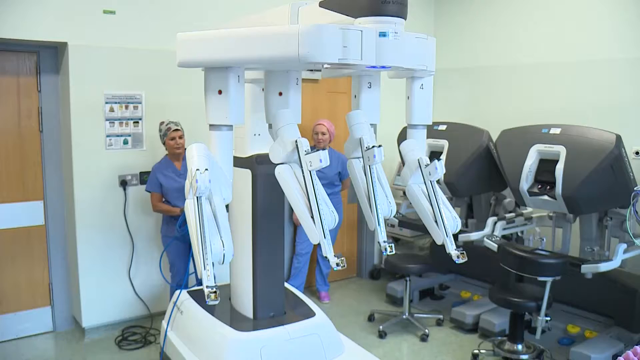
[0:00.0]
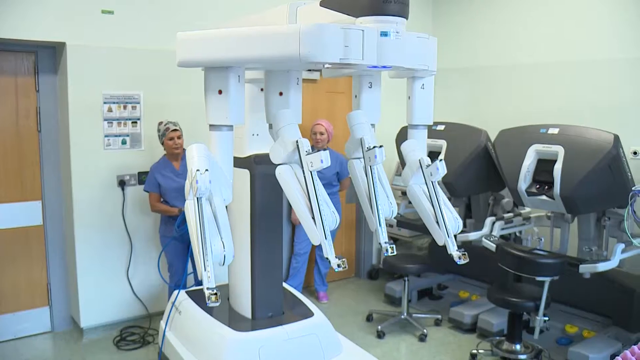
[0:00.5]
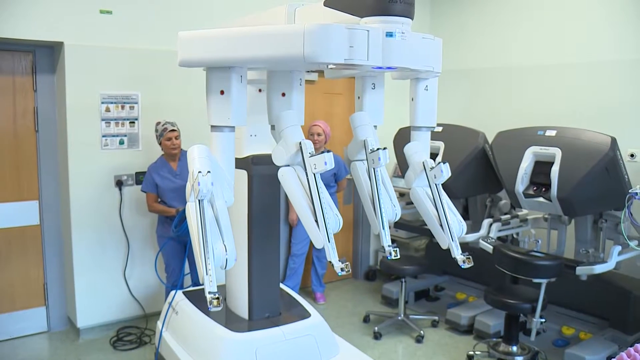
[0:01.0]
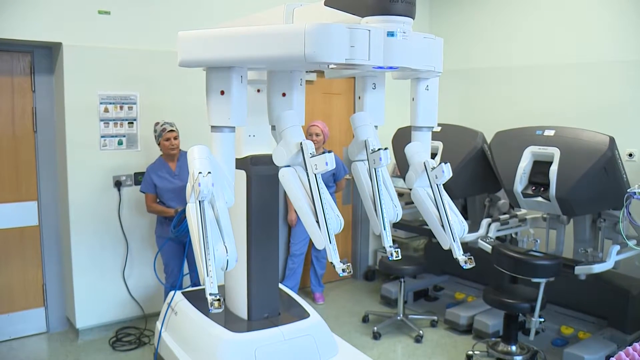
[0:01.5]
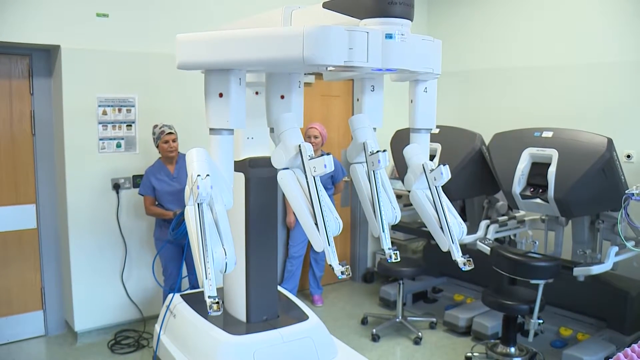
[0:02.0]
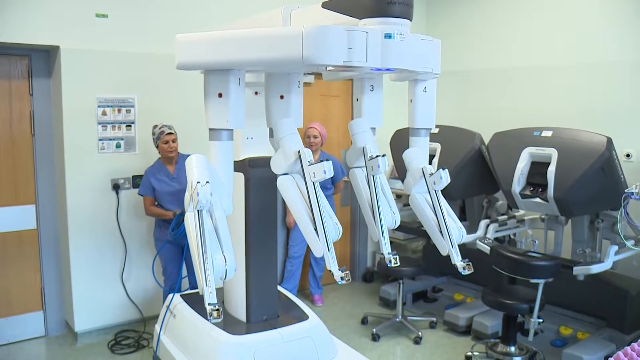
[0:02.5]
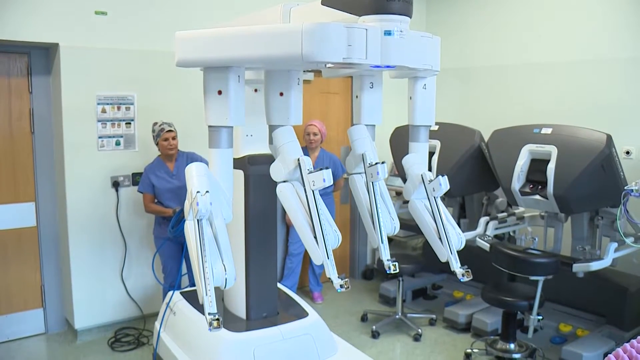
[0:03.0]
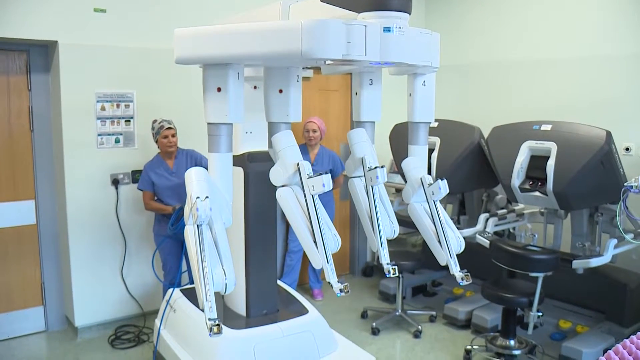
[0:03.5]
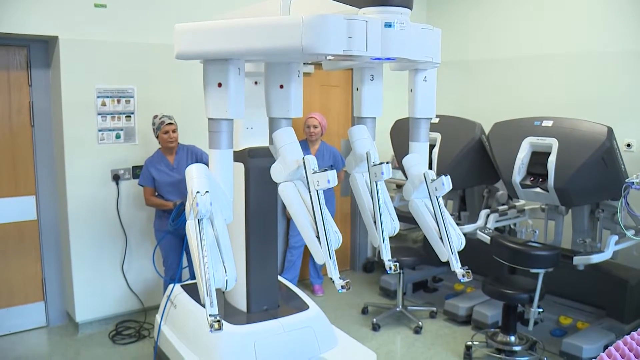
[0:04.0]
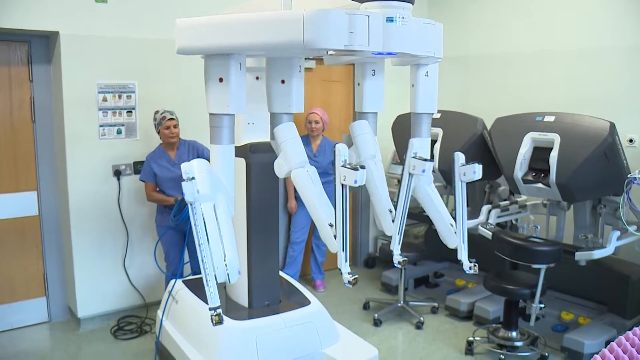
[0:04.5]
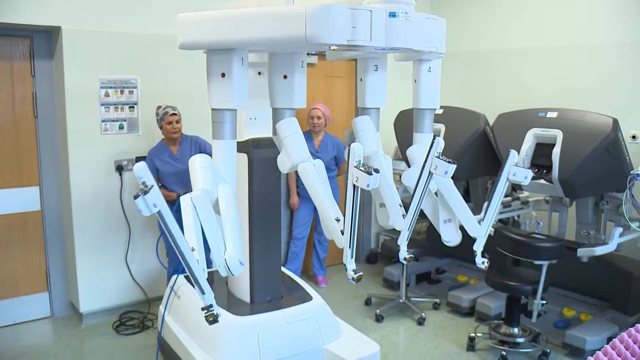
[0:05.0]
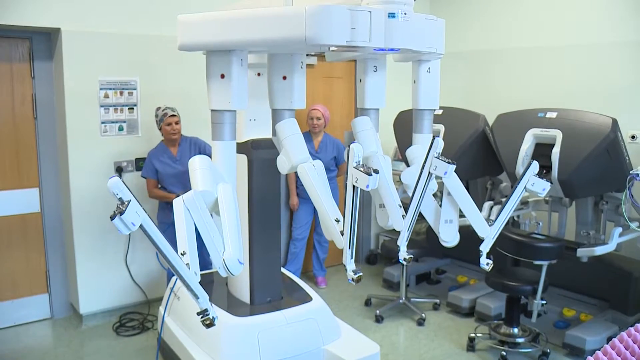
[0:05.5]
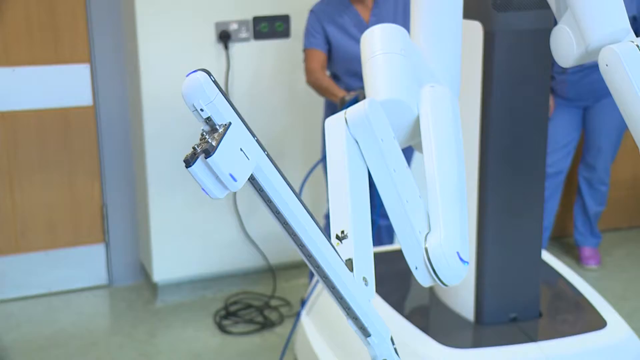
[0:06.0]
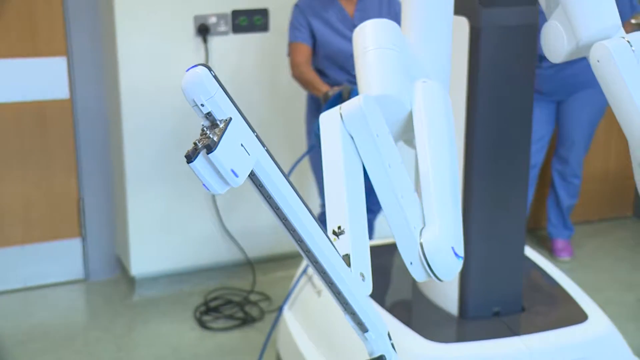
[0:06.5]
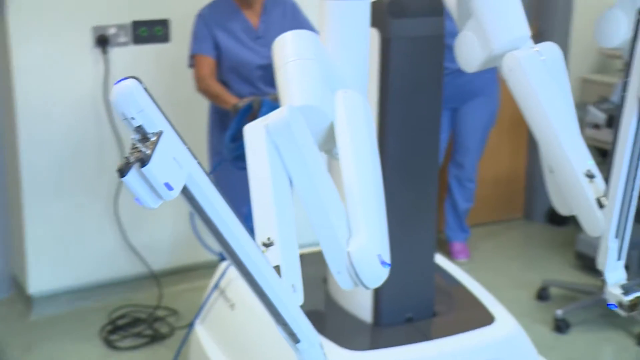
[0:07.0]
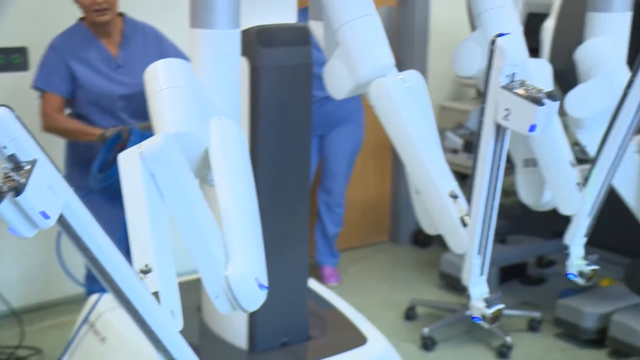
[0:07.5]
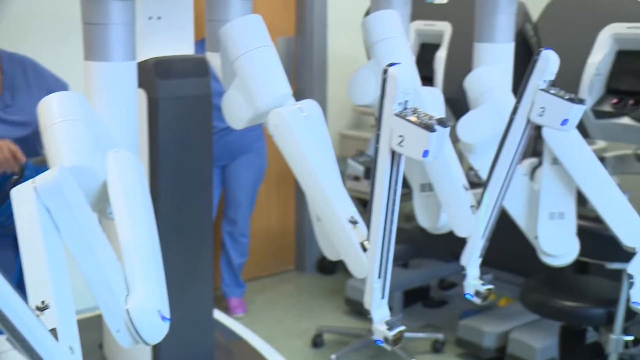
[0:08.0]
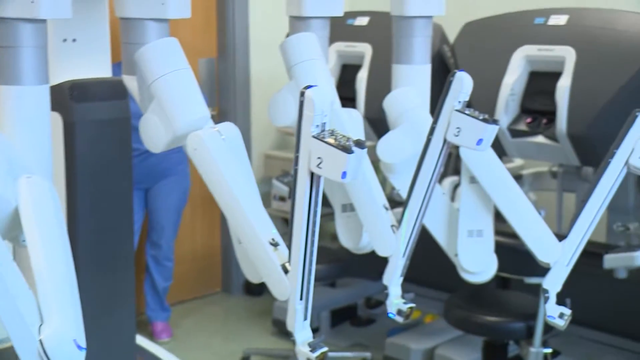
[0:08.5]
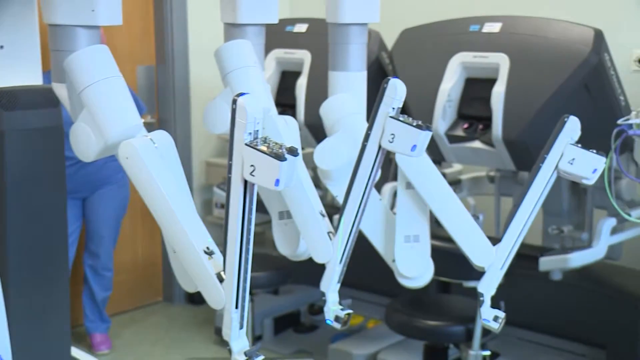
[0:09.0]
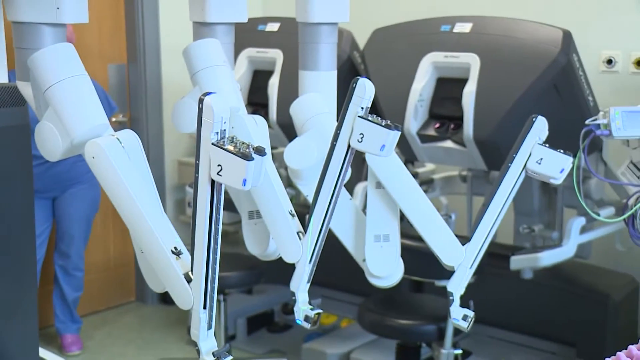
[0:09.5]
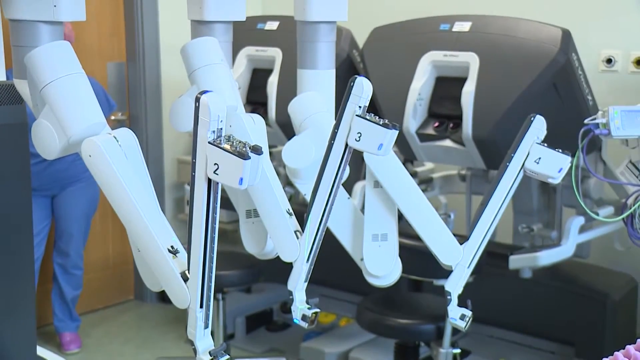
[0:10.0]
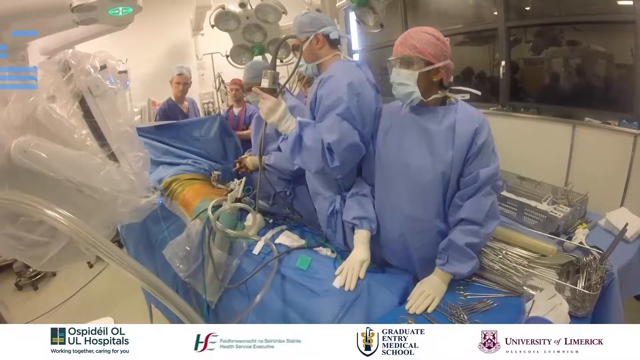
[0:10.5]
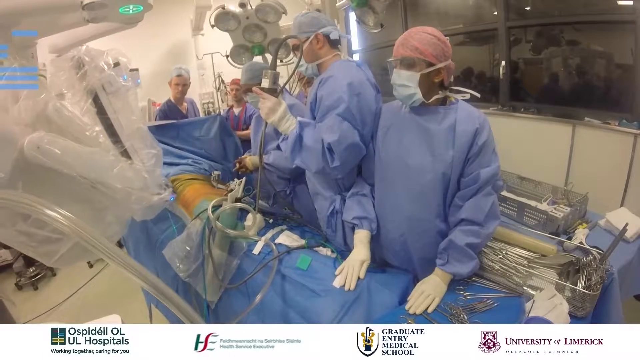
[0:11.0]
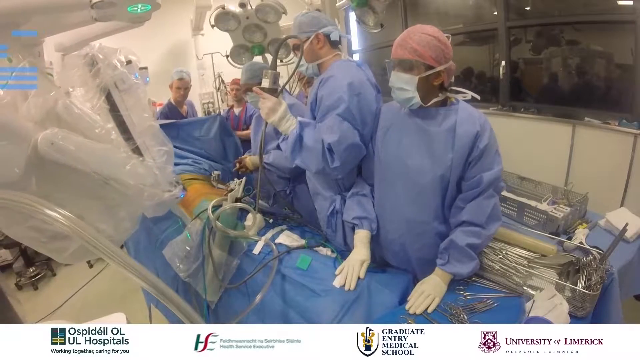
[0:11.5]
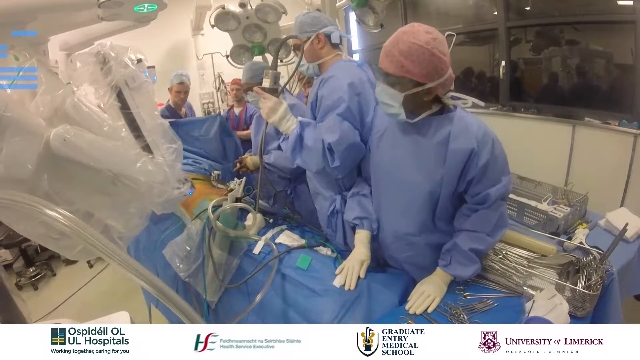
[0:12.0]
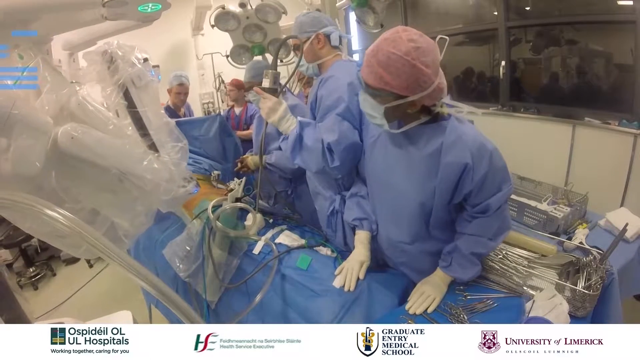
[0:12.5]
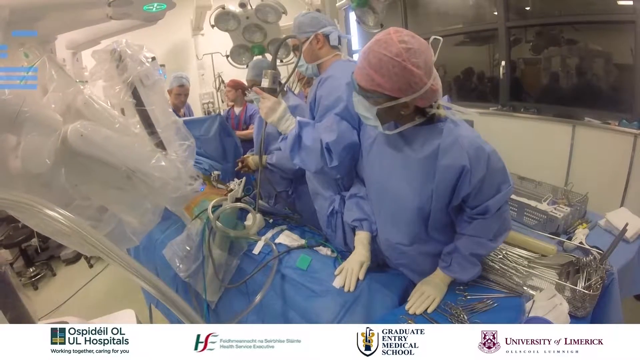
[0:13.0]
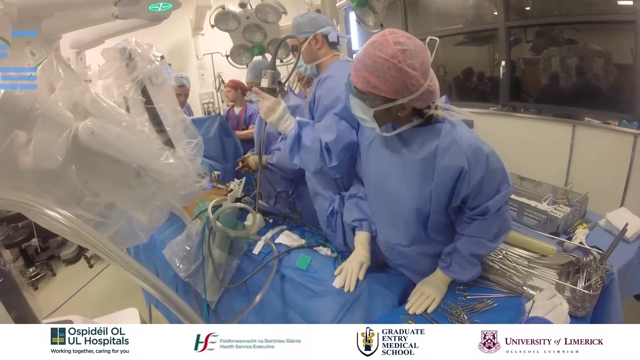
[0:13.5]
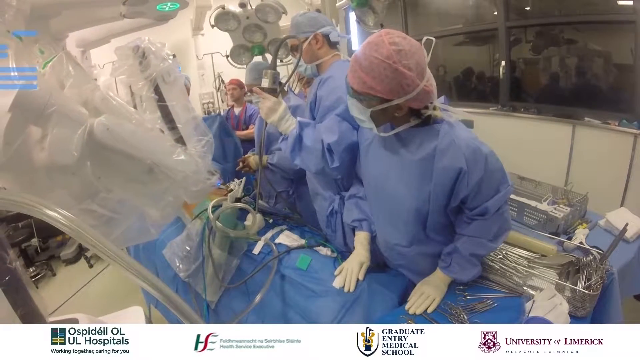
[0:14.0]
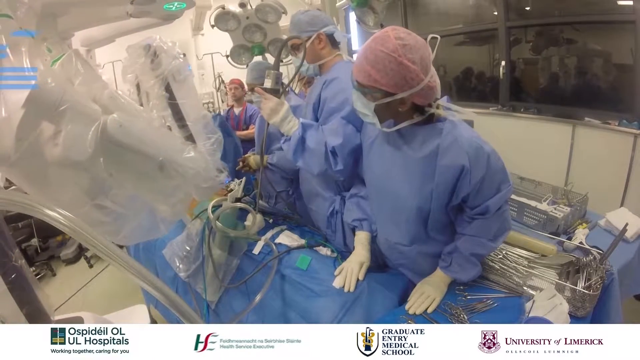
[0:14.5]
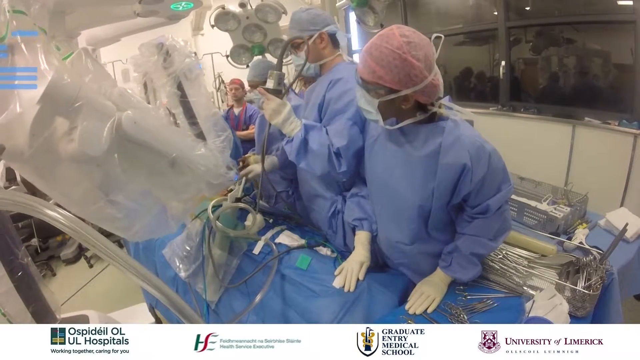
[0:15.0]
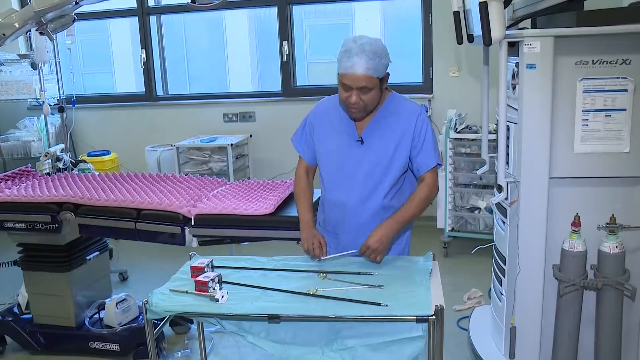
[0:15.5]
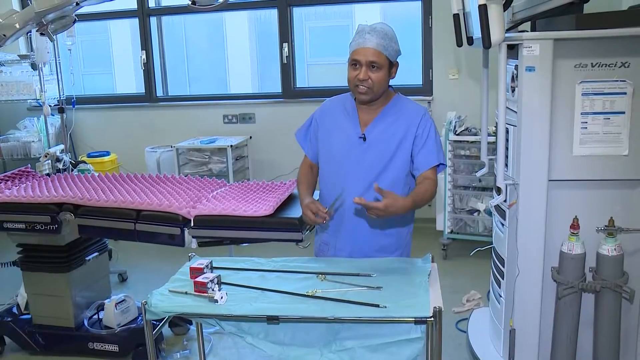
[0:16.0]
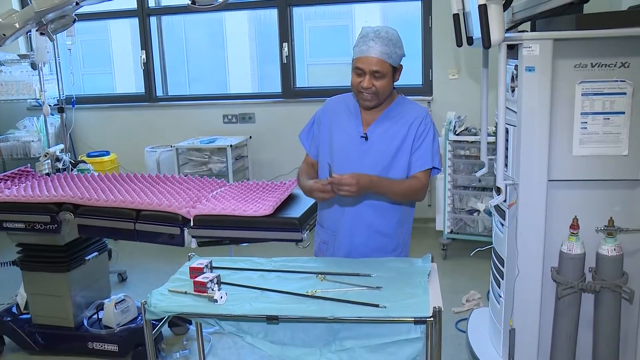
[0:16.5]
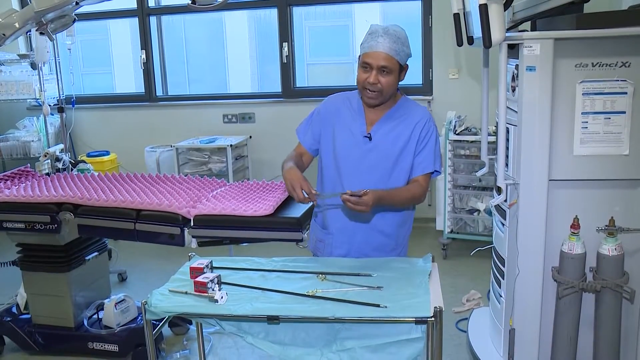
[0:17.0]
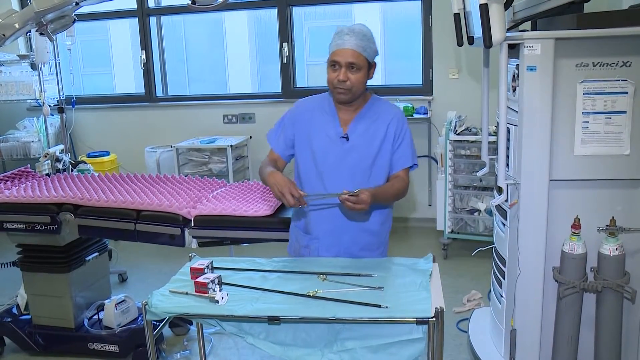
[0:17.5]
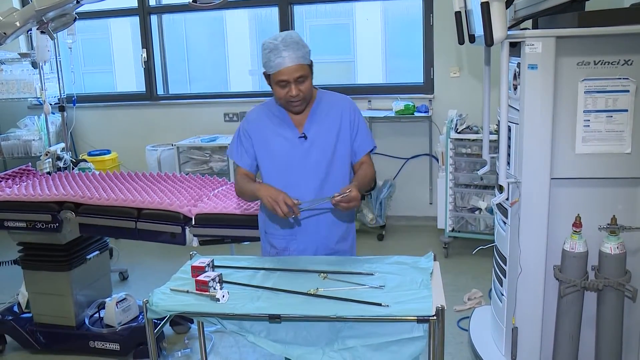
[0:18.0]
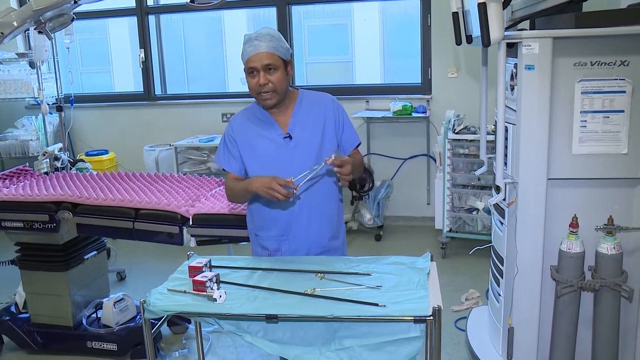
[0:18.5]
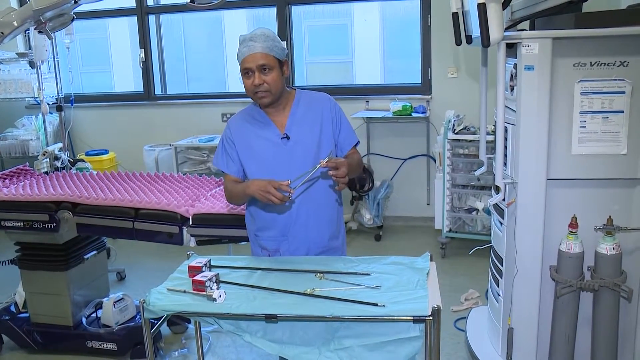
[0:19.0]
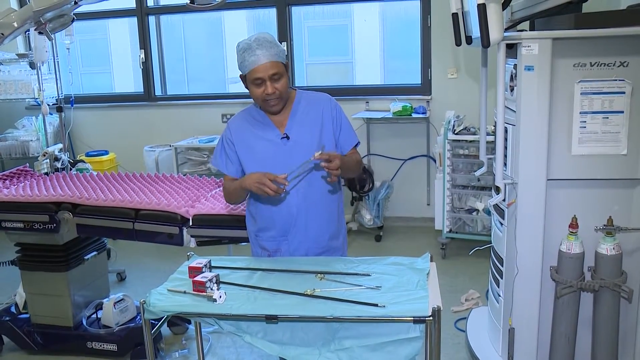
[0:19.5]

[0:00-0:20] A medical room holds a lot of specialized equipment. Two women in blue medical scrubs are in the room; the woman on the left wears a white and green cap and the woman on the right wears a pink cap. The woman on the left operates a white machine, pushing the machine's parts forward. As it reaches its destination, the machine's arms descend and then extend. The camera pans to the right to get a look at the arms, which are numbered. The scene switches to a surgery room with five medical professionals in total, wearing blue scrubs, white gloves and caps, some also wearing face masks and goggles. A machine moves from the right side of the frame over the patient. Next, a room with a single medical professional in blue scrubs and a blue cap appears; he excitedly shows off his tools to the camera person, looking up at the camera person and then at his tools.